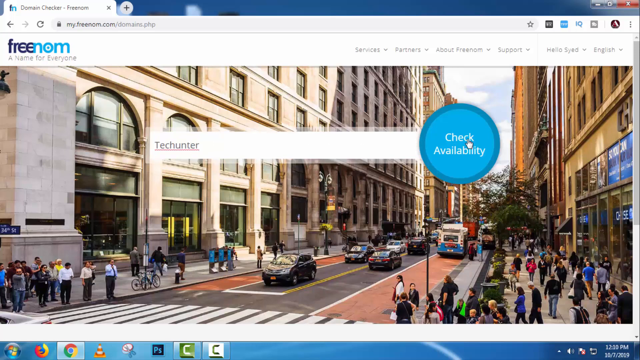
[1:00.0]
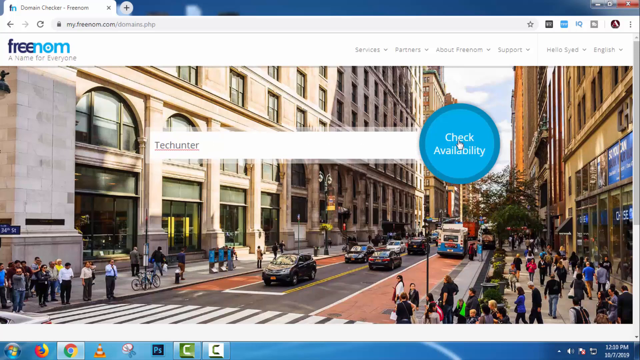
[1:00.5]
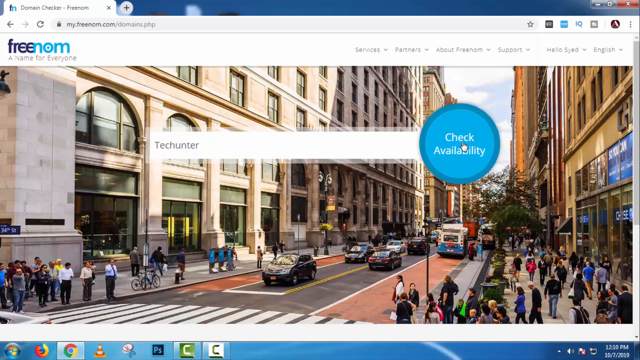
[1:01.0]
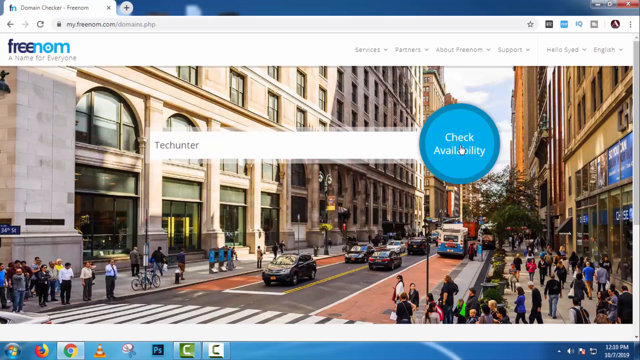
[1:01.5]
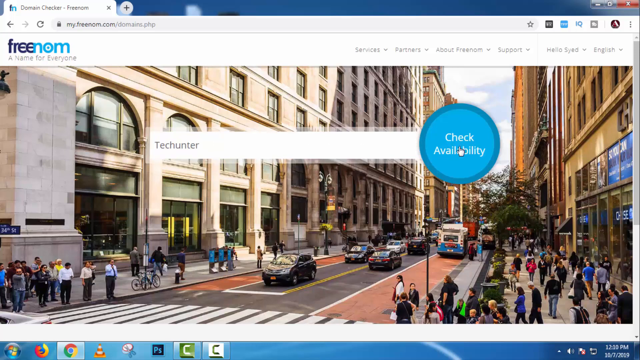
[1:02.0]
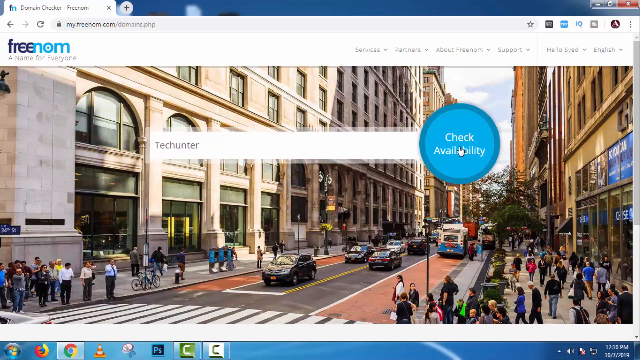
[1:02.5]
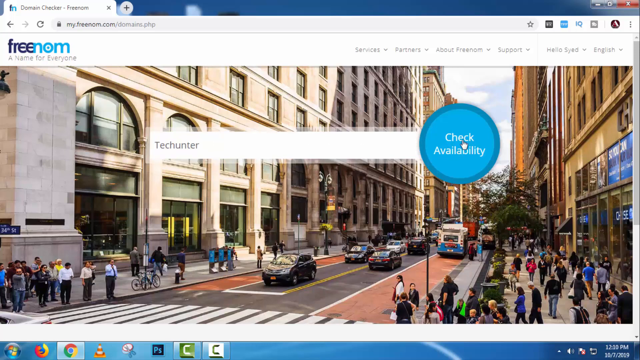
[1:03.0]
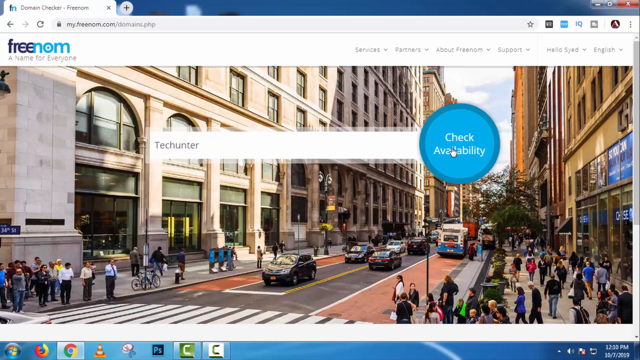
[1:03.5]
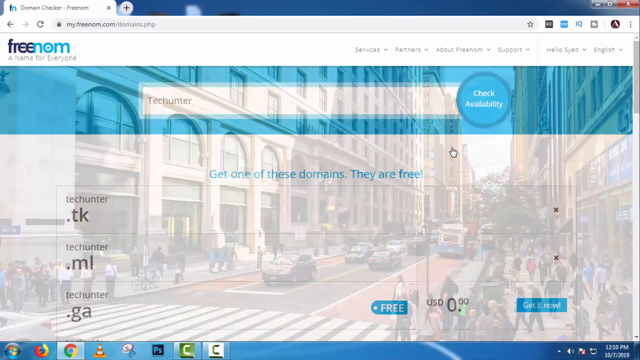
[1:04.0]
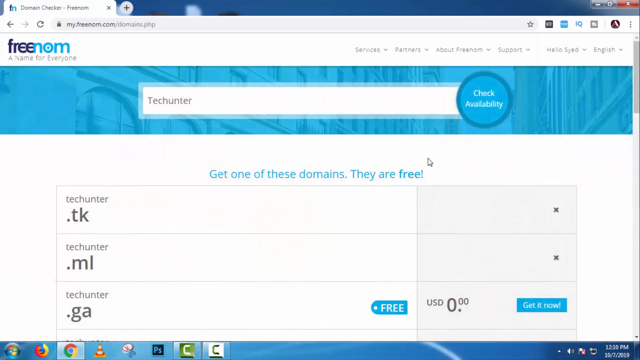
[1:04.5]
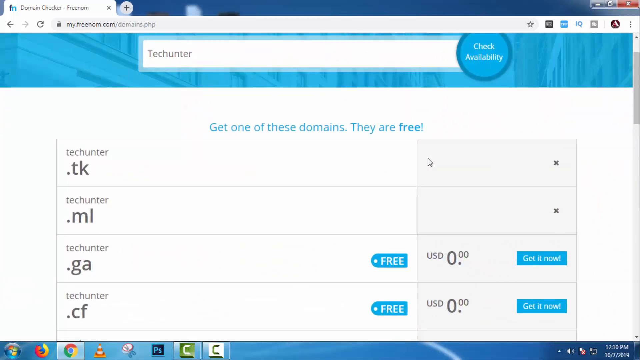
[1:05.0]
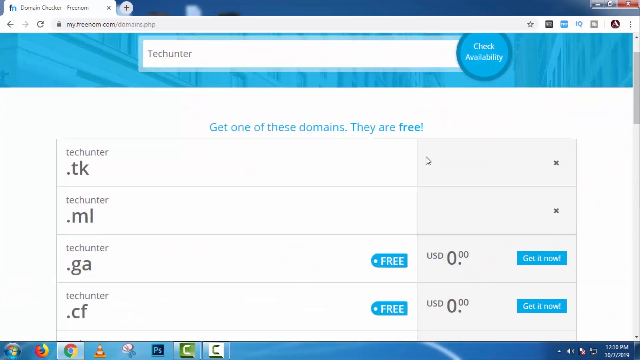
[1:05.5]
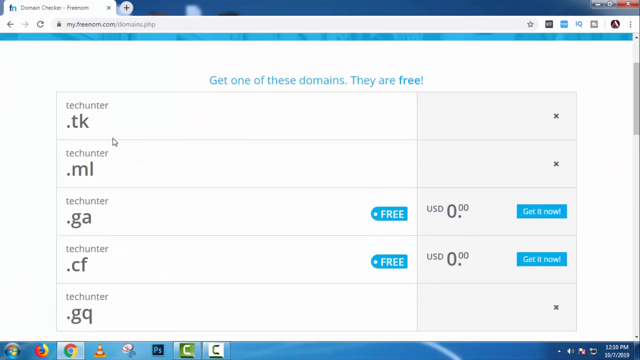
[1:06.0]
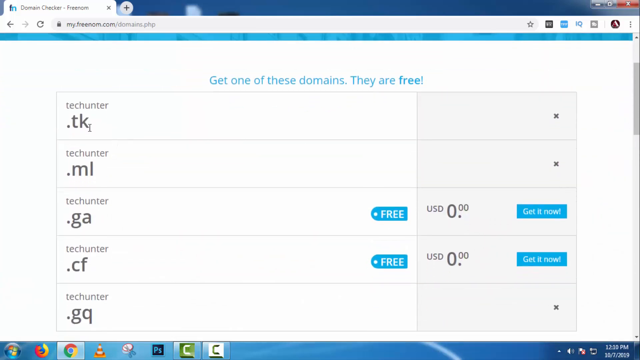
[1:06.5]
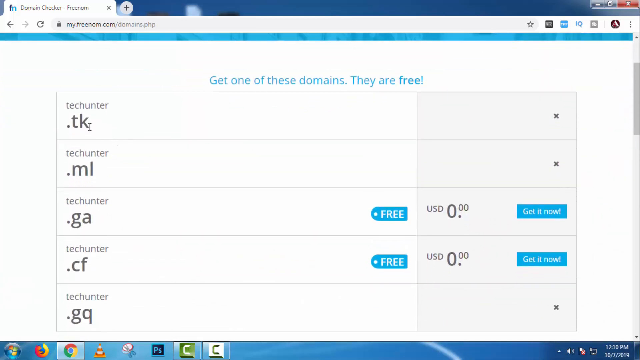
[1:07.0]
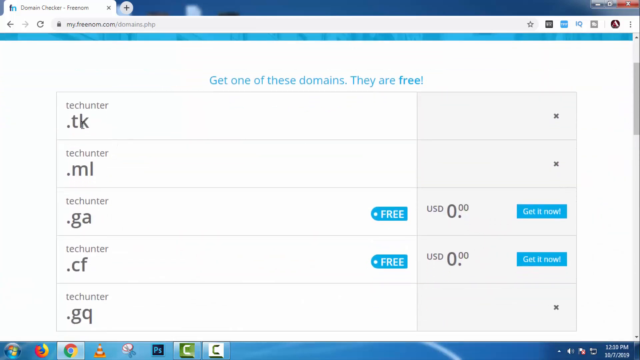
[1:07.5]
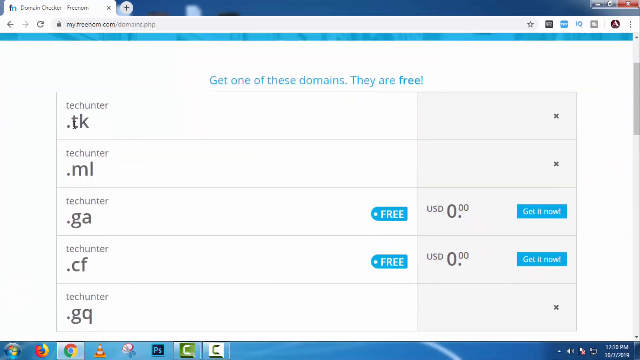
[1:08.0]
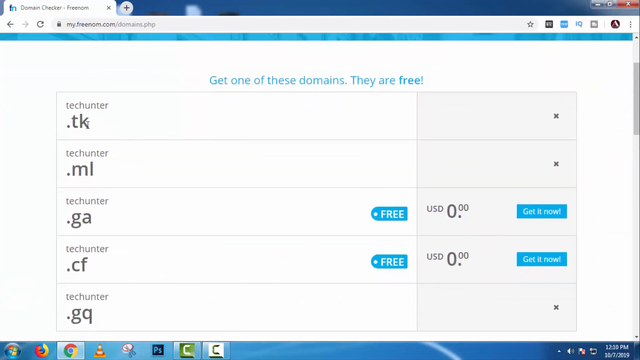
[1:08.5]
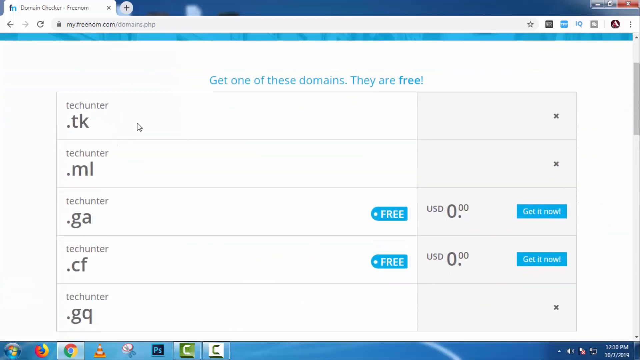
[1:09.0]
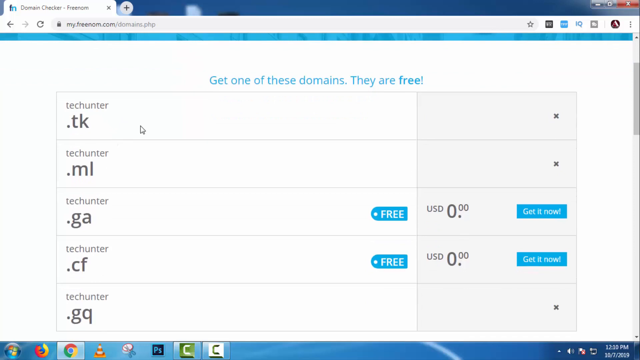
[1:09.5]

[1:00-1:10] The Check Availability button is clicked, leading to a new screen with a white background. The same sky blue, slightly turquoise search bar and Check Availability circle appear, now over a blue bar that goes all the way across the screen. Underneath, on white, text in the same blue reads "get one of these domains. They are free." Below are five rows of options, with a gray column off to the right side. The first row reads "TechHunter" in small letters with ".tk" in bold underneath, then come "TechHunter.ml" in larger bold letters, "TechHunter.ga", "TechHunter.cf", and on the bottom apparently "TechHunter.dq". The third and fourth rows have a little tag reading "free" and show zero, zero; the last column seemingly shows prices, indicating these are free.